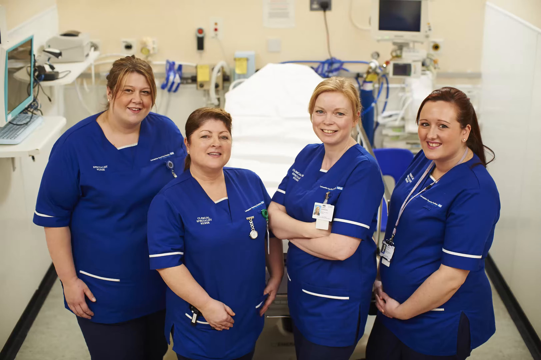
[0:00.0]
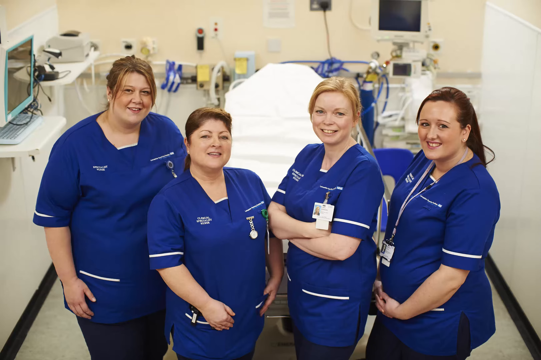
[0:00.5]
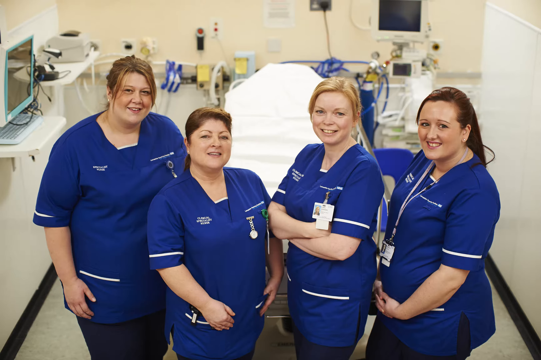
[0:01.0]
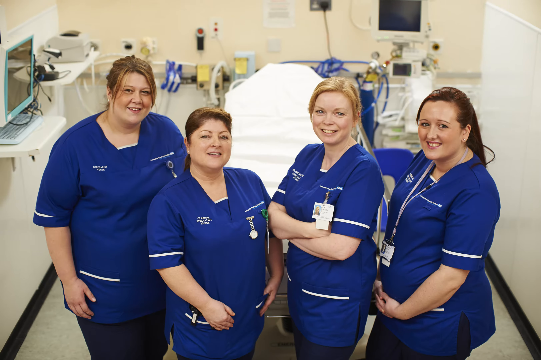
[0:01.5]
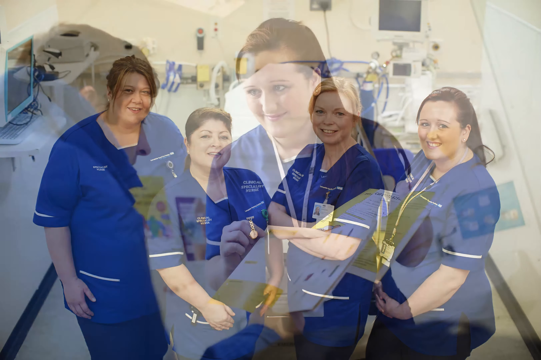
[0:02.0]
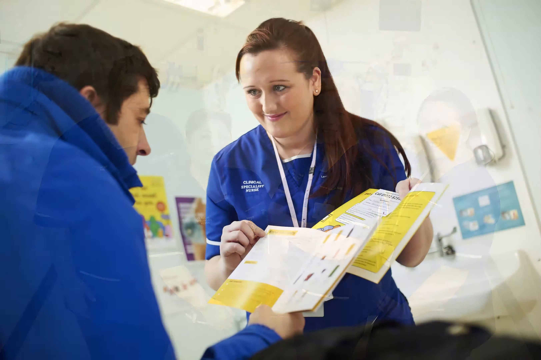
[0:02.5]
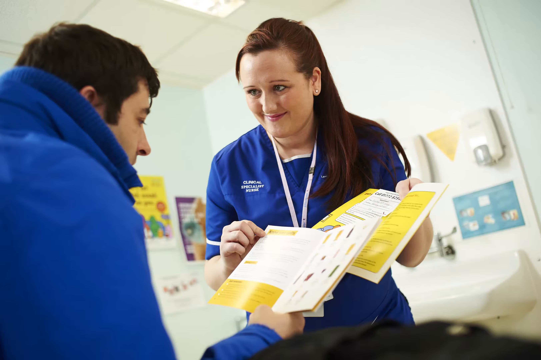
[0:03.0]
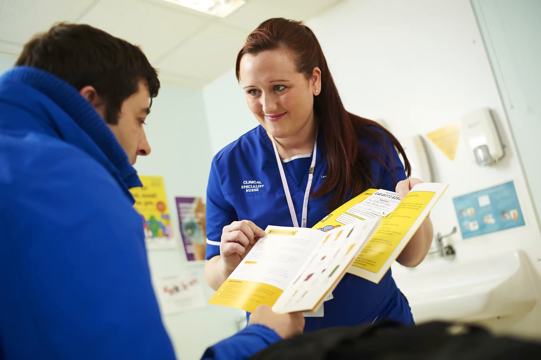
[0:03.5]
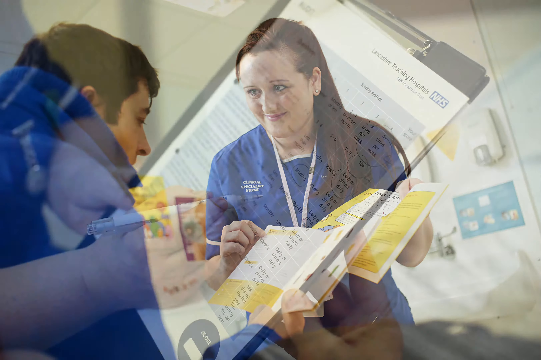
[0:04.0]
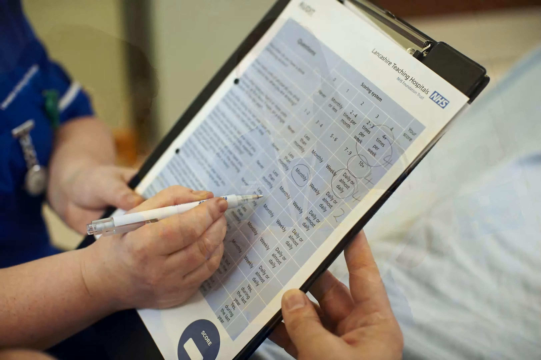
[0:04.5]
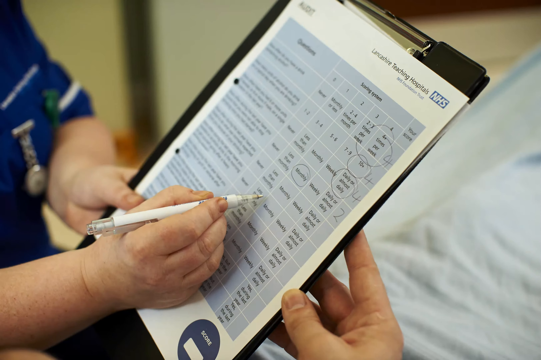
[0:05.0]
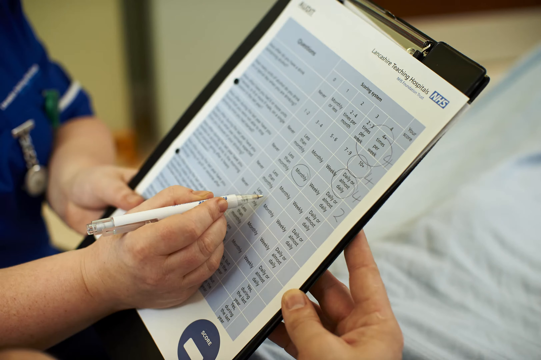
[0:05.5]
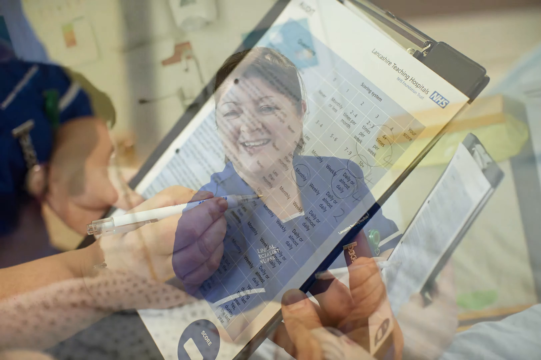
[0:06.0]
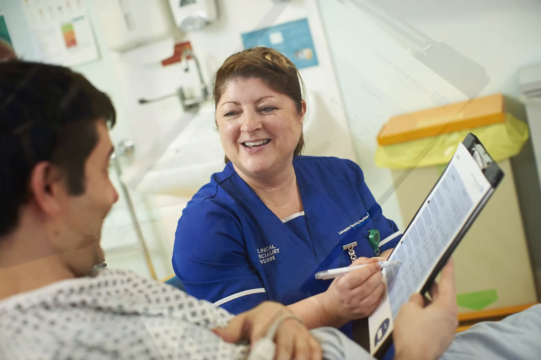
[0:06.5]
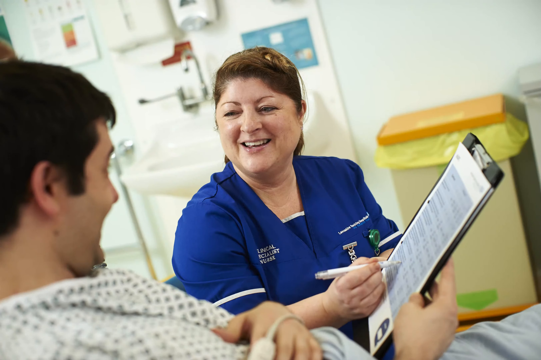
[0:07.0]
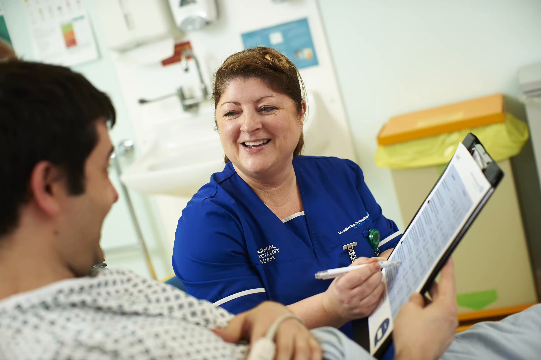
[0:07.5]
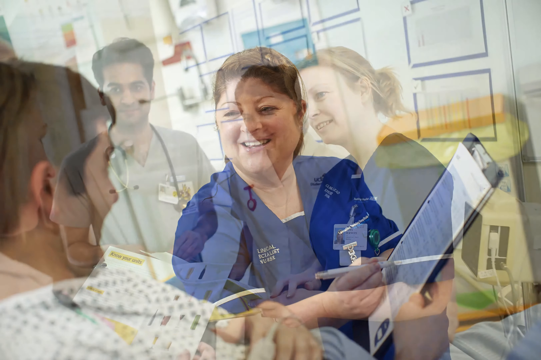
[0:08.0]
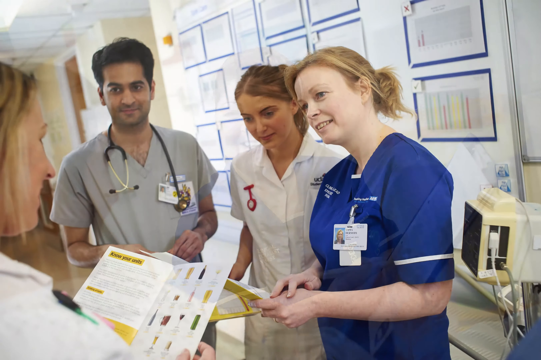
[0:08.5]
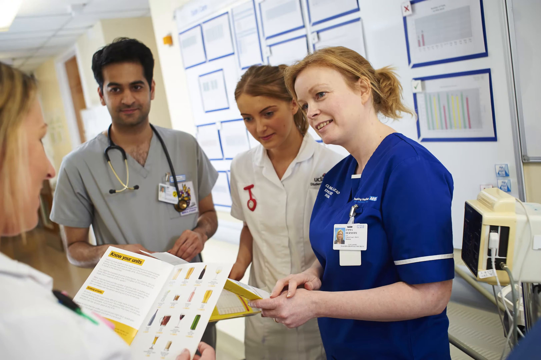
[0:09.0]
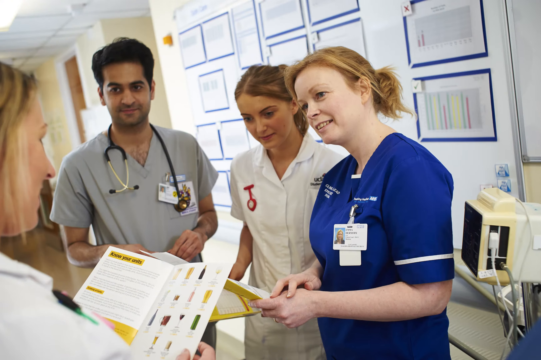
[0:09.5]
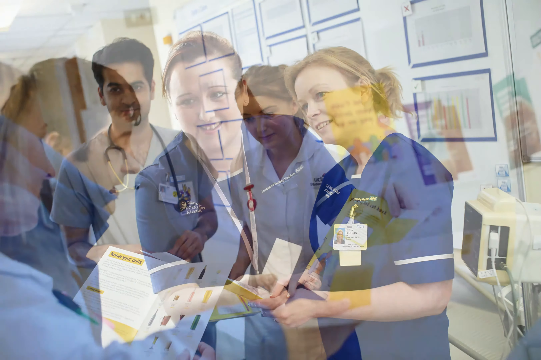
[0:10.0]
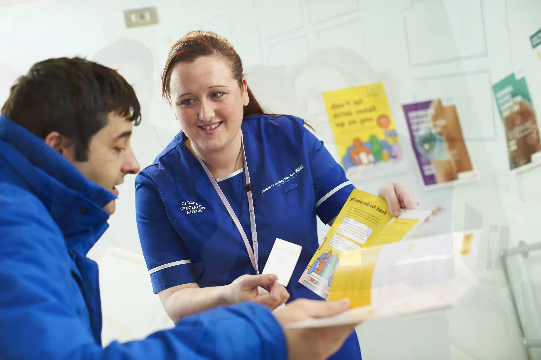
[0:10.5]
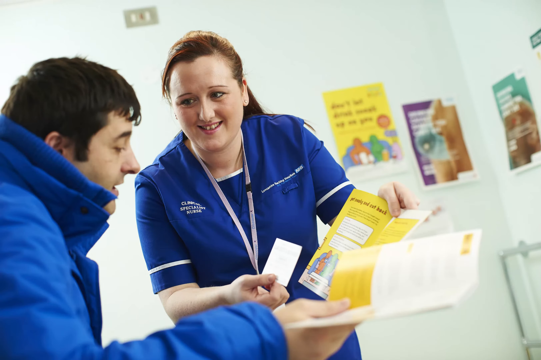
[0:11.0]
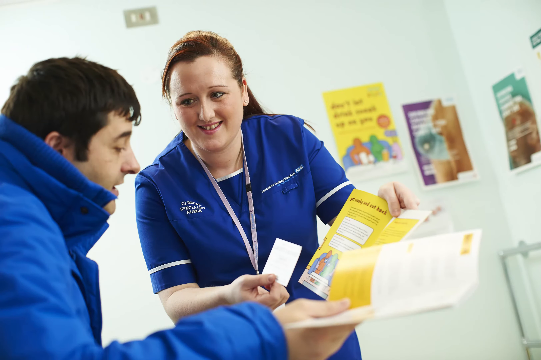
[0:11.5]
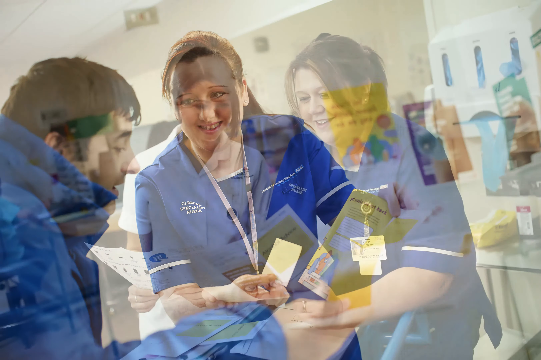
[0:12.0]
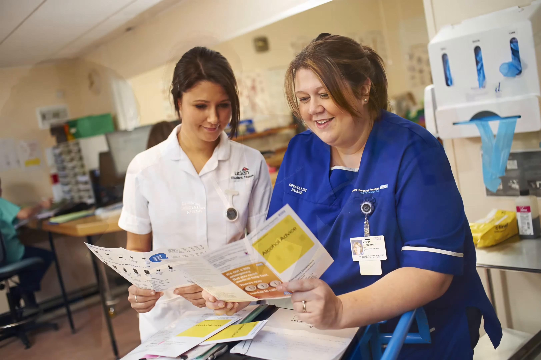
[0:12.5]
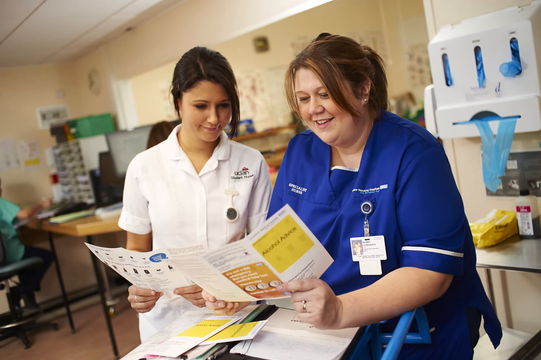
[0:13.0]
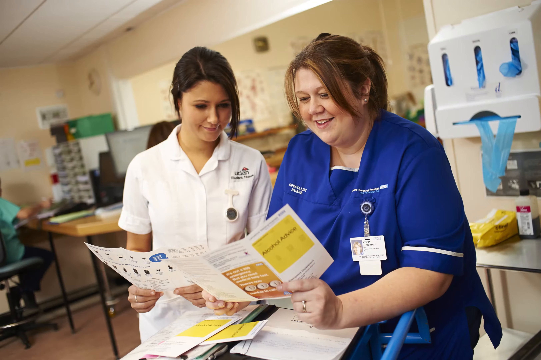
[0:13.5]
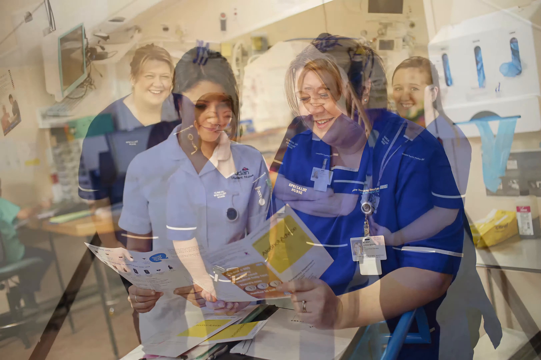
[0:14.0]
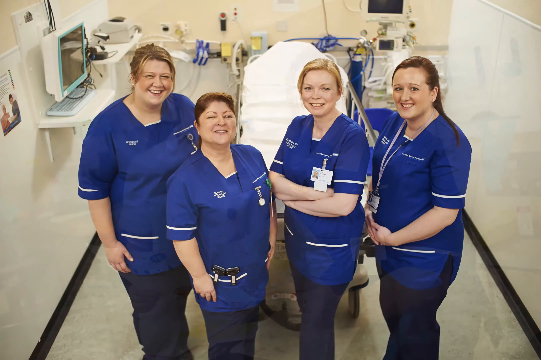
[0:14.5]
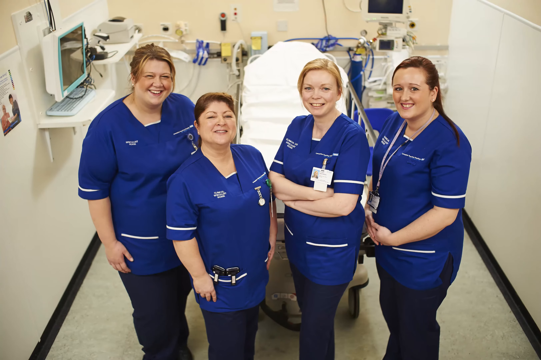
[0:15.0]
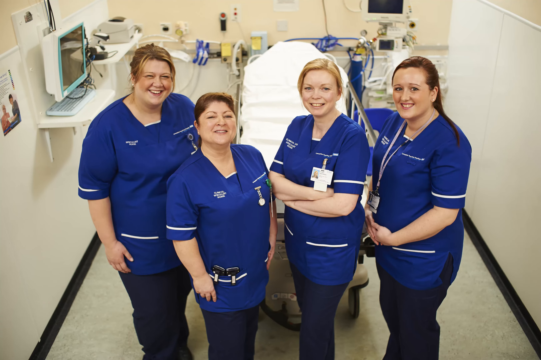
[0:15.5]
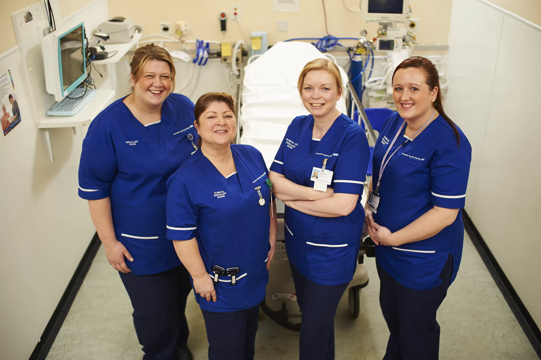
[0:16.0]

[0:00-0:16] Four women stand together in a medical facility setting, with a stretcher and various equipment behind them. All of them wear blue scrubs with white trim, embroidered with their names and the name of the facility, though the embroidery cannot quite be made out. The video changes to a brunette woman who appears to be in her 30s interacting with a patient; she hands him a pamphlet while holding another pamphlet. The embroidery on her scrubs reads "clinical specialist nurse." The video then cuts to what looks like a clipboard with "Lancashire Teaching Hospitals NHS" at the top and a survey for the patient, which the nurse is helping him answer by circling different items. Next, the two are seen interacting. A doctor and another nurse appear, and this nurse and another doctor interact out on the floor. The video returns to the woman assisting the patient with pamphlets, then shows another group of nurses reading the pamphlet together, before returning to a final shot of all the nurses standing together in the center of what is sort of a medical setup room.